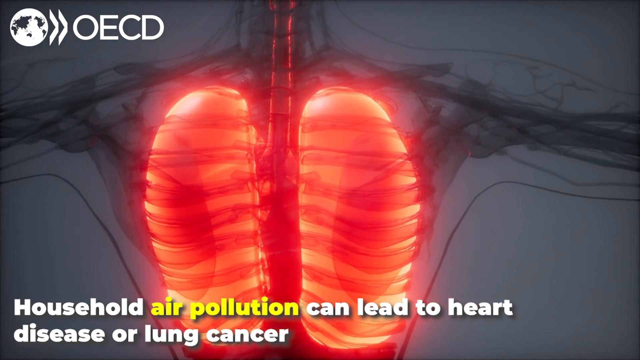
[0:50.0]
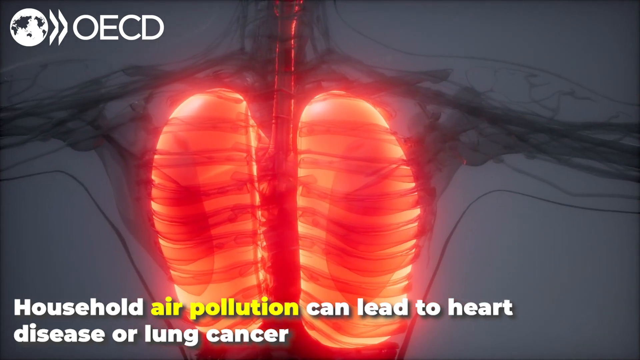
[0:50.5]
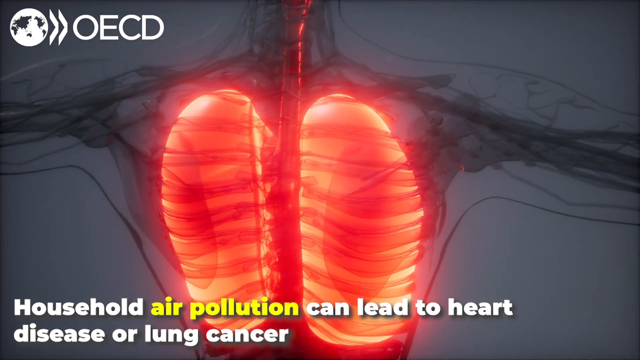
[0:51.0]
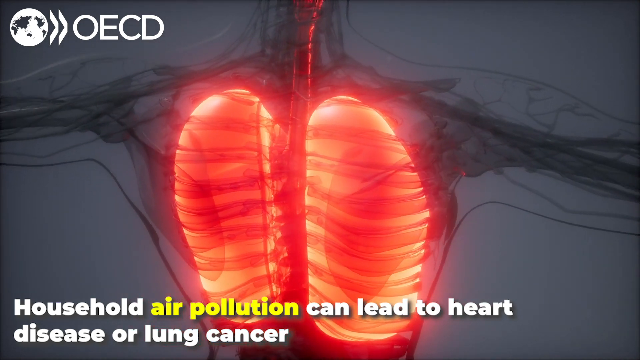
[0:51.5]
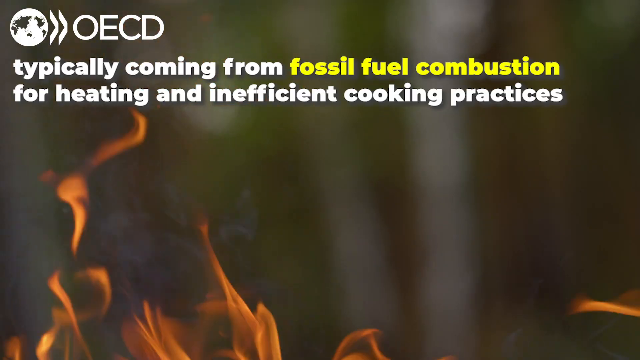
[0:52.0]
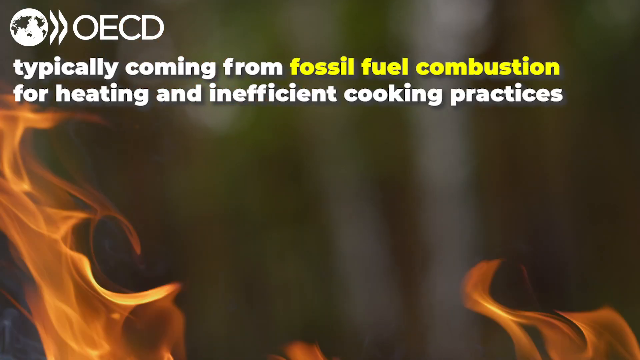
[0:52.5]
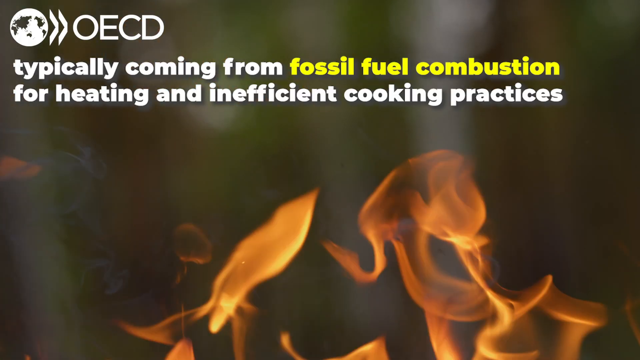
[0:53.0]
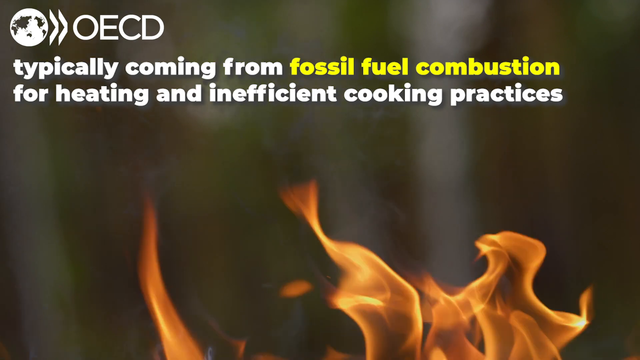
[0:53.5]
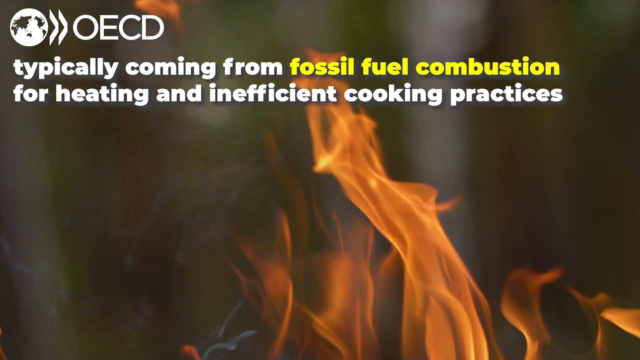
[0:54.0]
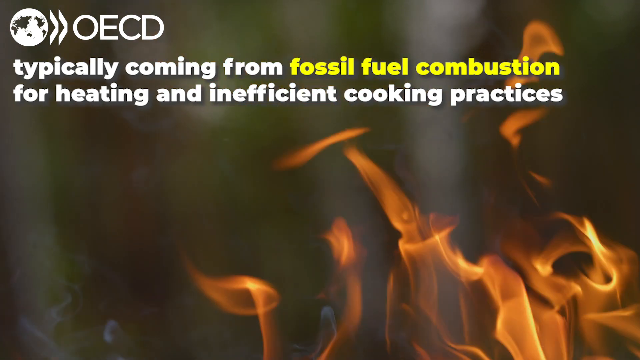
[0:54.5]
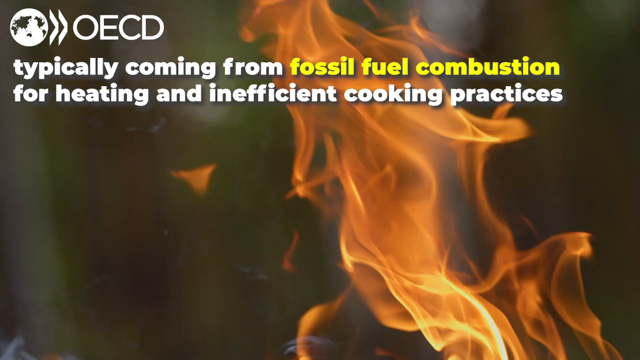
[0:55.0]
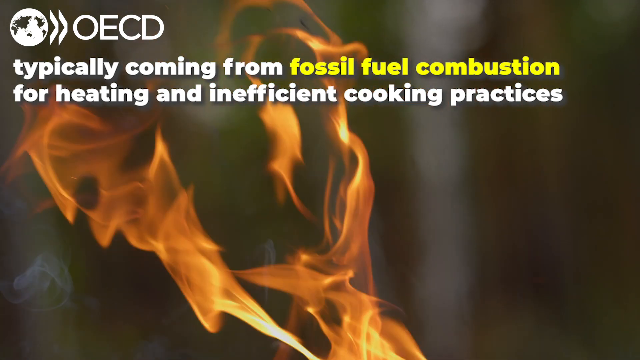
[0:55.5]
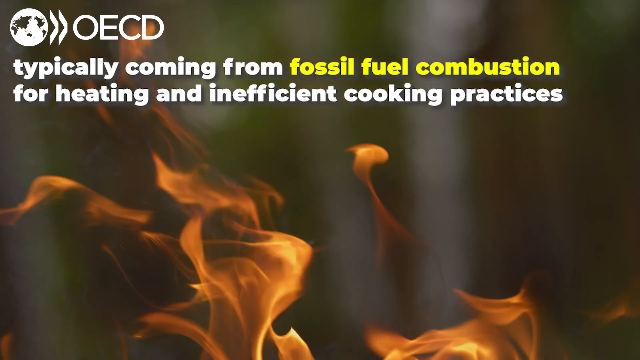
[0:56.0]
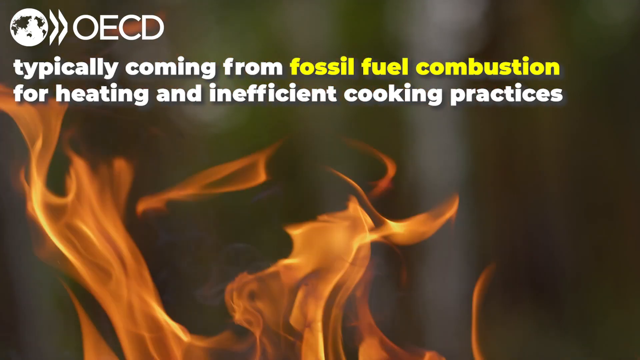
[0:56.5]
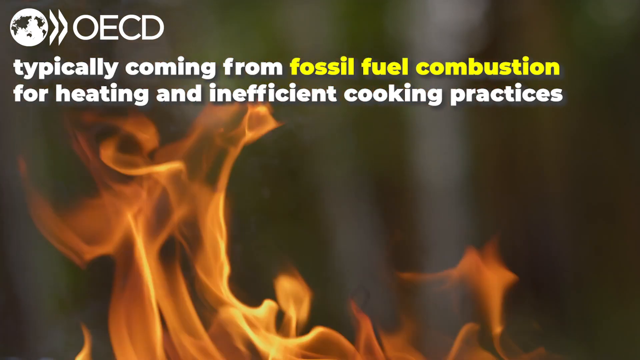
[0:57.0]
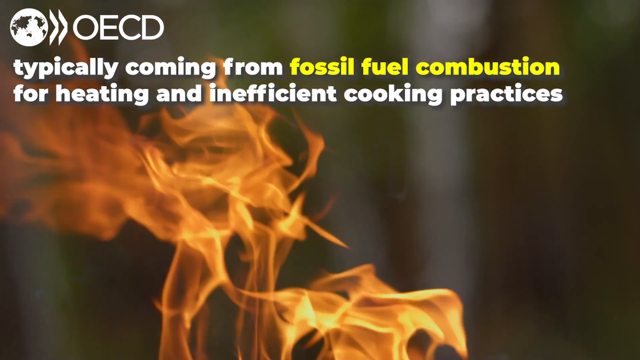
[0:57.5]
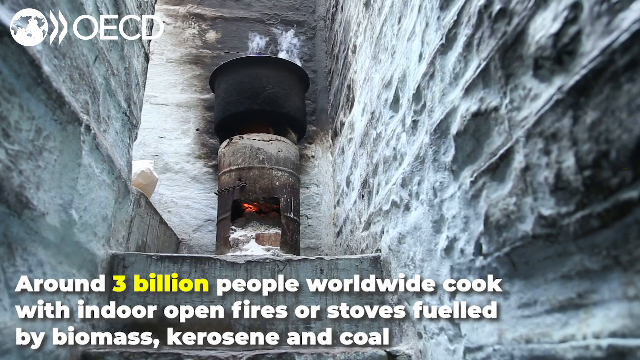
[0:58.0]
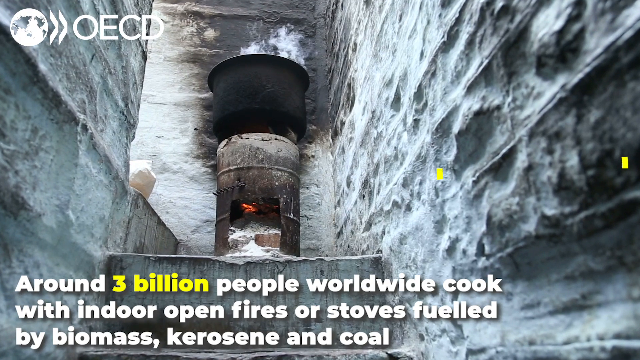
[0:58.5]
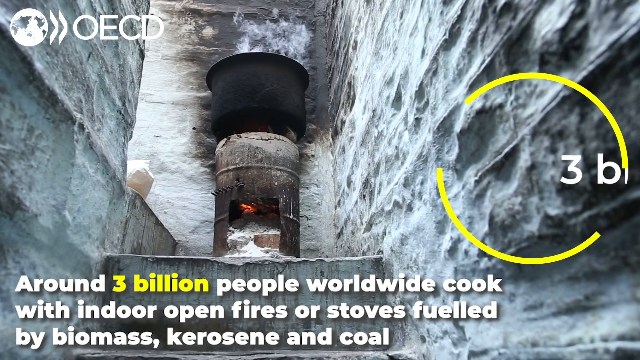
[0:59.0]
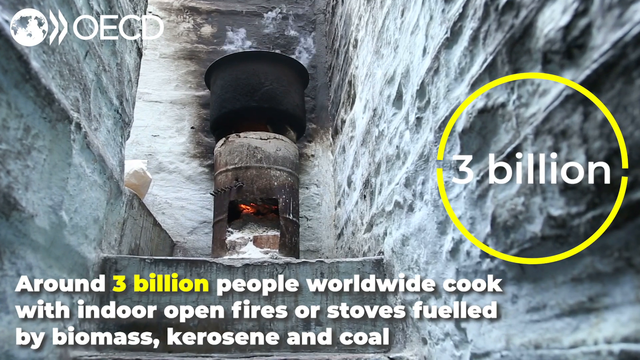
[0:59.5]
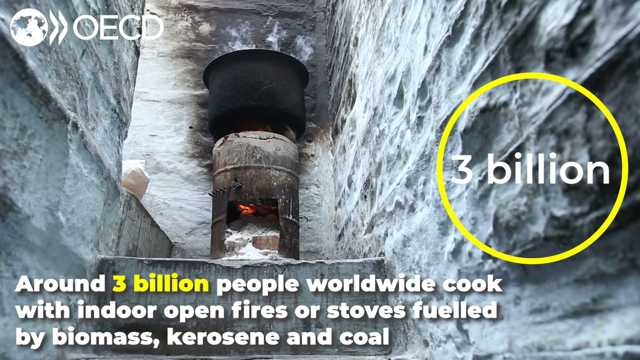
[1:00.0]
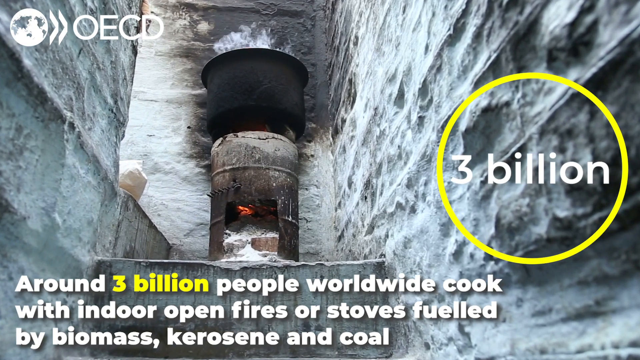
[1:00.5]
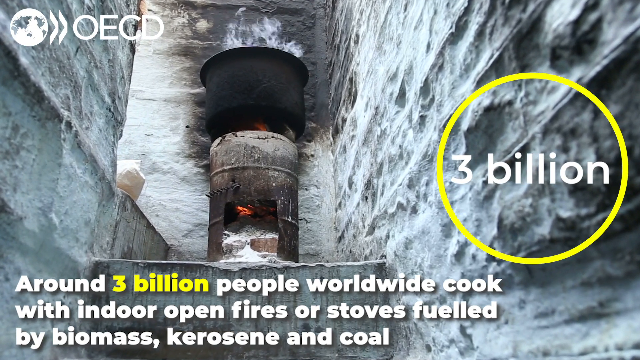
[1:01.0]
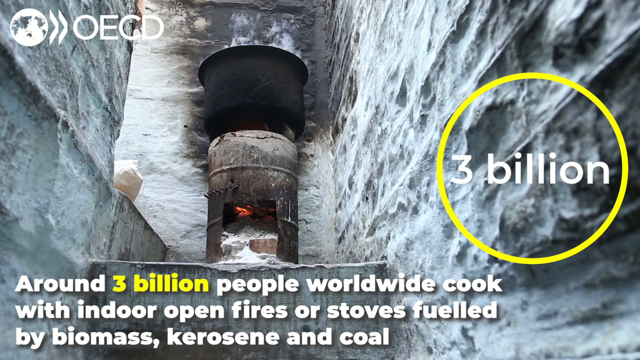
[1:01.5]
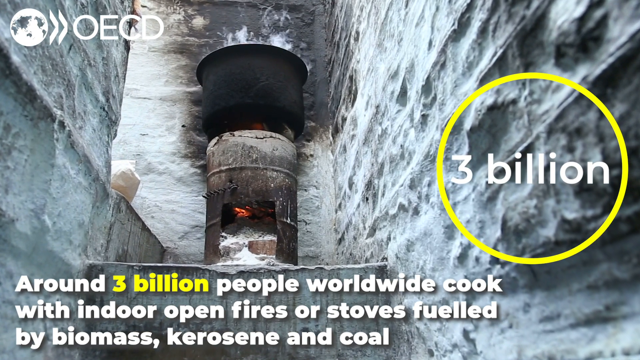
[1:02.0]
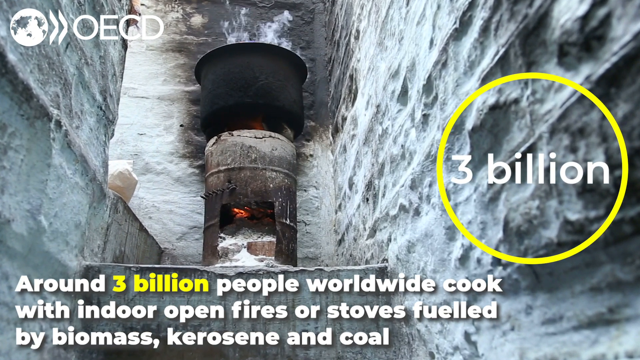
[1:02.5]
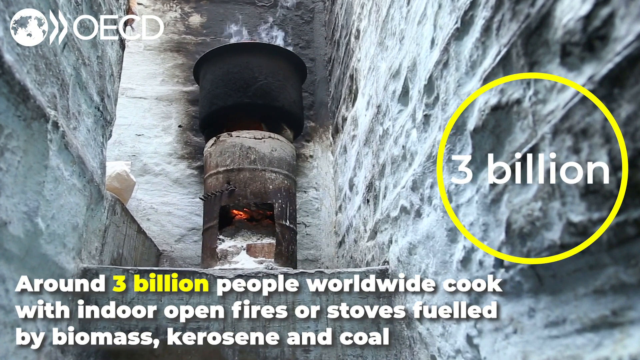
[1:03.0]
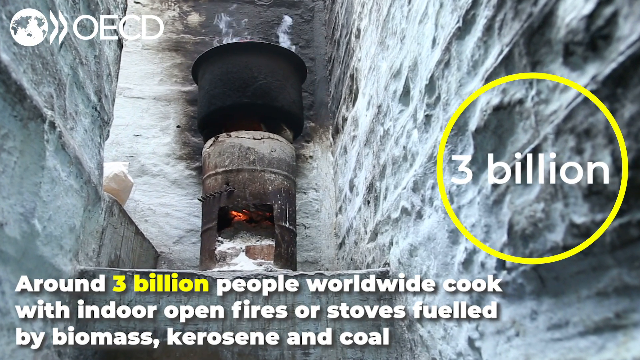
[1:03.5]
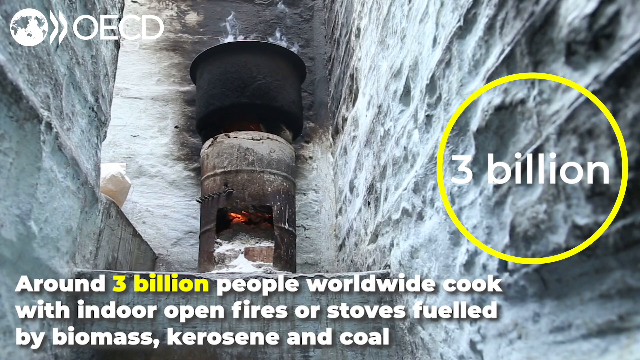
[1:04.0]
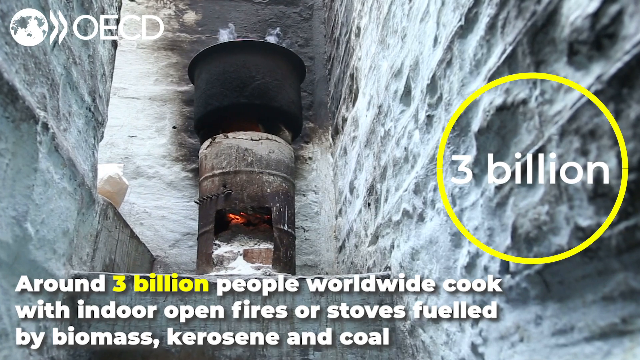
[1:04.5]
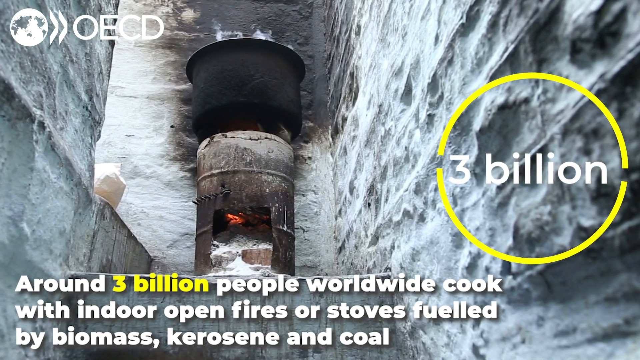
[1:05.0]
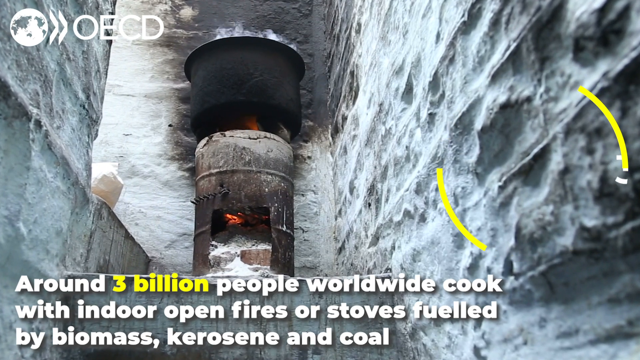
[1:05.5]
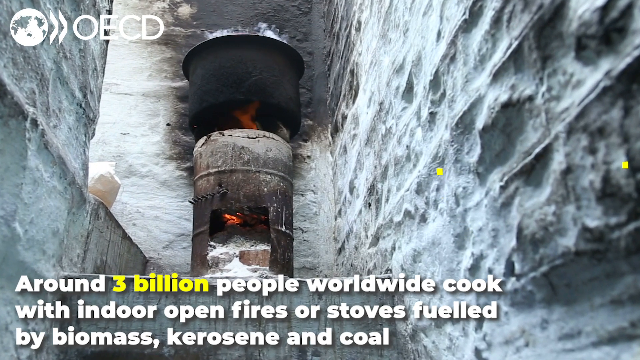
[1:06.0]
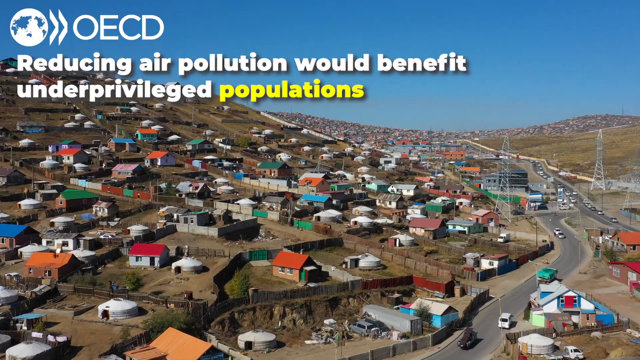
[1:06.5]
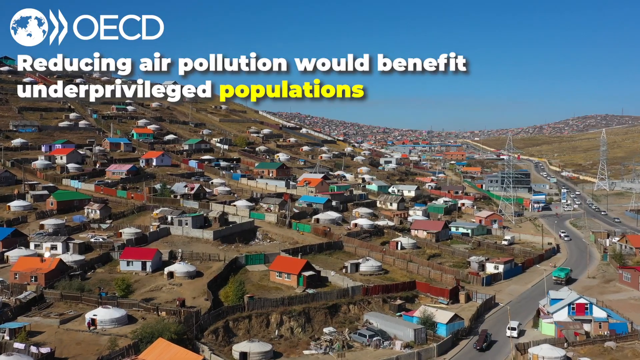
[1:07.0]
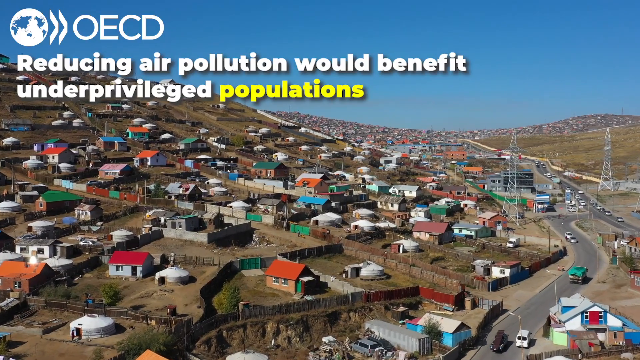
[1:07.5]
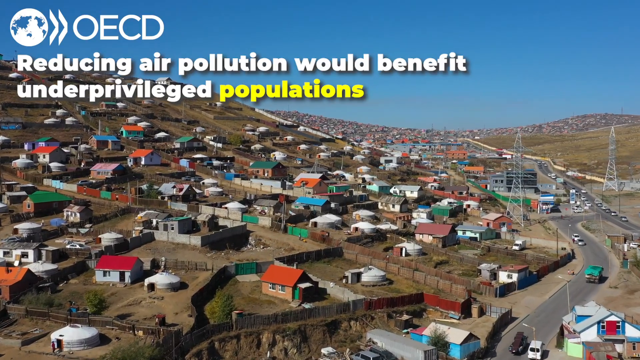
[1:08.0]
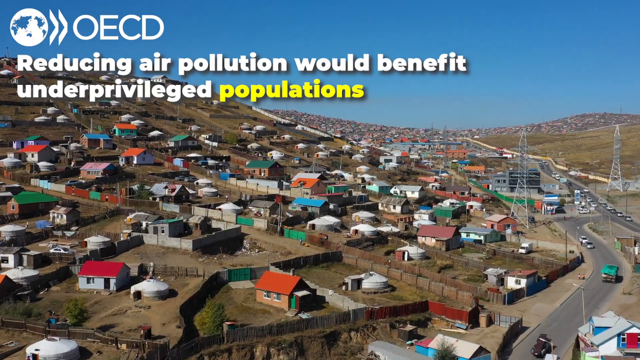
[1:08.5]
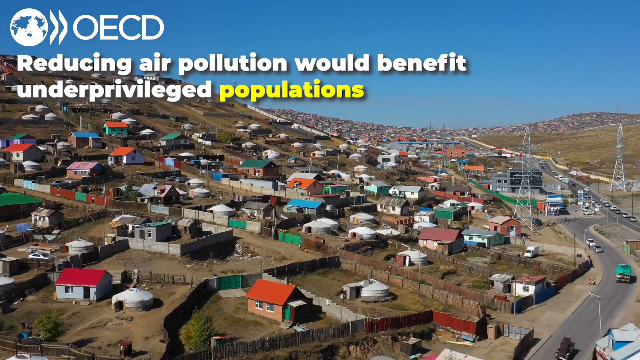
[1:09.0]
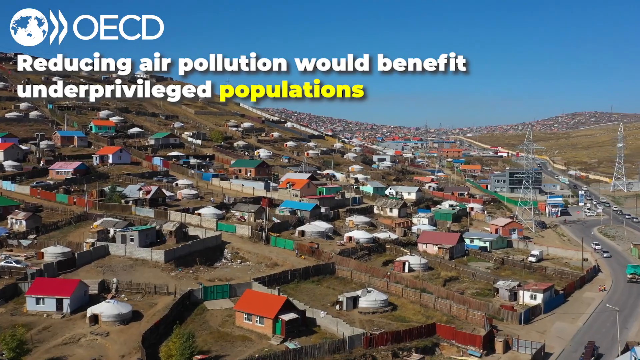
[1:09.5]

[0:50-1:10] The skeleton graphic rotates slowly in an anti-clockwise direction. Then flames rise from the bottom of the screen, seeming to head more to the left as though the wind is blowing them. Text on top reads "typically coming from fossil fuel combustion for heating and inefficient cooking practices", with "fossil fuel combustion" highlighted in yellow. The next shot is at the bottom of some stone stairs, with white and grey bricks to the left and right that seem quite dirty and old. The view seems to stay at the bottom of the stairs; at the top is some sort of stove with fire underneath and a big black pot on top, small bits of white smoke coming out of the top. Text at the bottom begins "around 3 billion people worldwide cook" and goes on to mention stoves fueled by biomass, kerosene and coal. To the right of the screen, "three billion" is written in white with a yellow circle around it. Next, an aerial view moves over a shanty-style town, maybe in an underprivileged country, under a very blue sky. The camera slowly pans forwards over houses of various colours with tin roofs, some orange, some blue, some pink, and a couple of pylons are visible to the right. Text reads "reducing air pollution would benefit underprivileged populations", with "populations" in yellow.